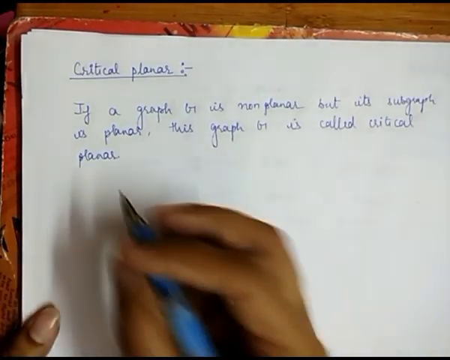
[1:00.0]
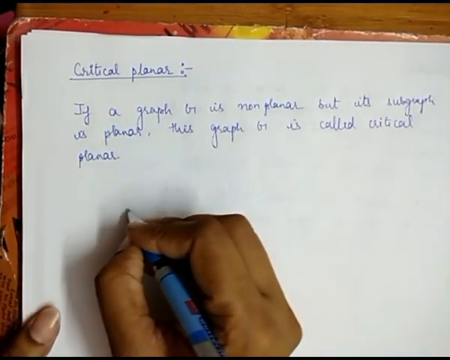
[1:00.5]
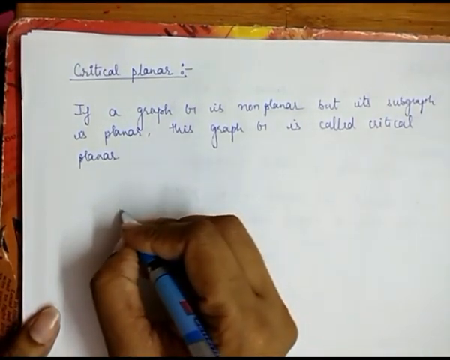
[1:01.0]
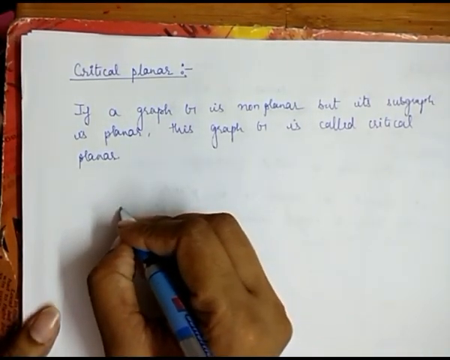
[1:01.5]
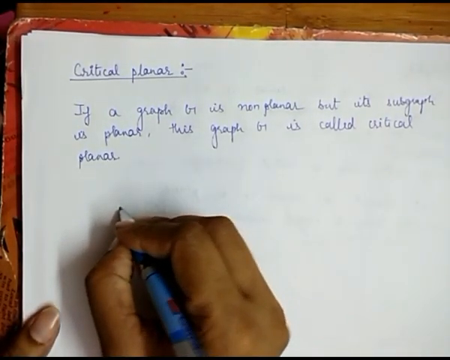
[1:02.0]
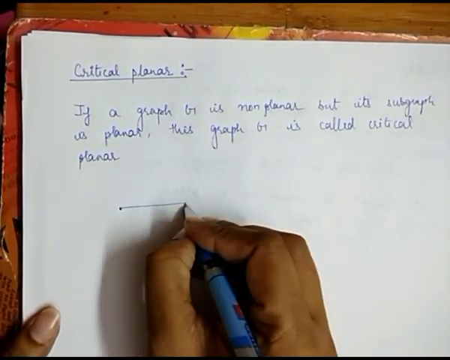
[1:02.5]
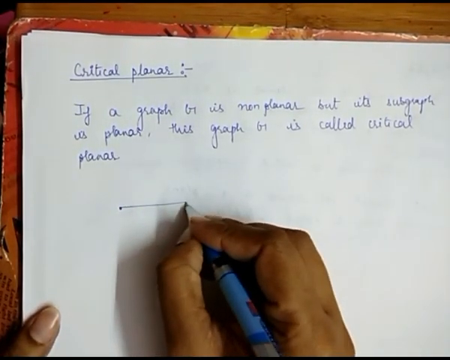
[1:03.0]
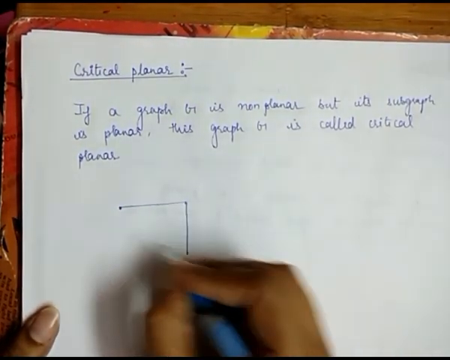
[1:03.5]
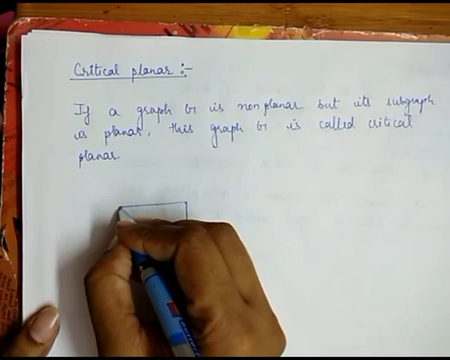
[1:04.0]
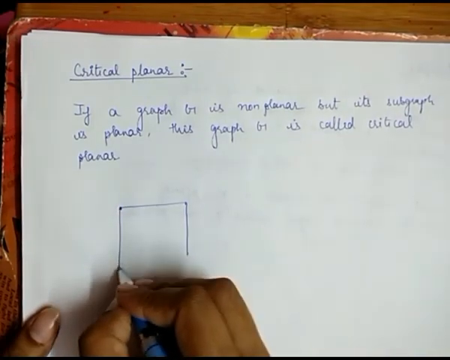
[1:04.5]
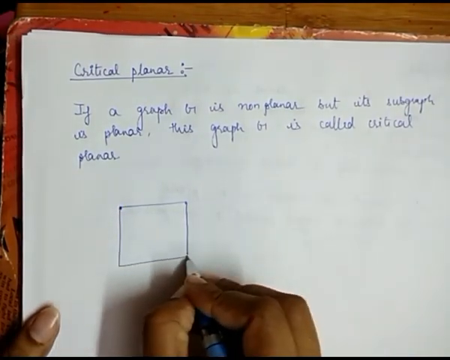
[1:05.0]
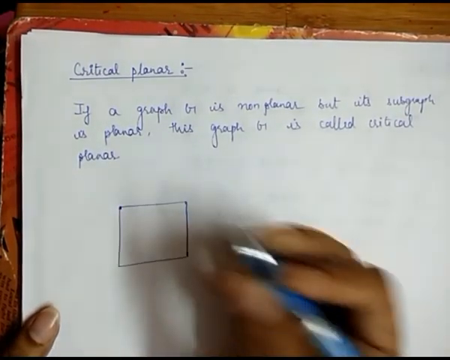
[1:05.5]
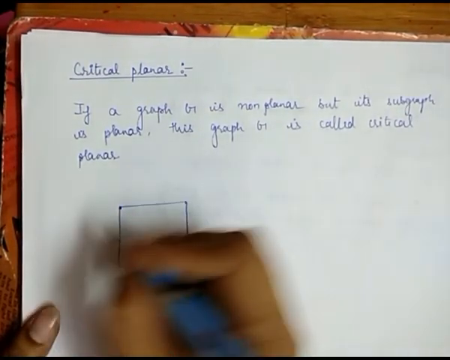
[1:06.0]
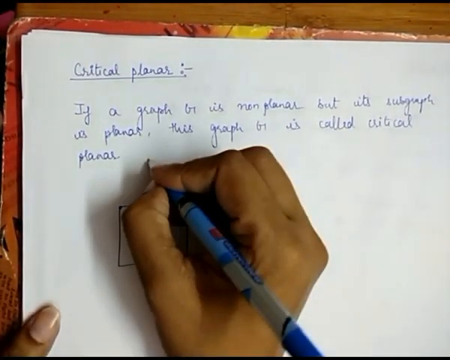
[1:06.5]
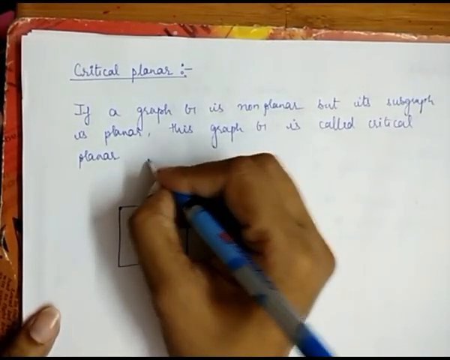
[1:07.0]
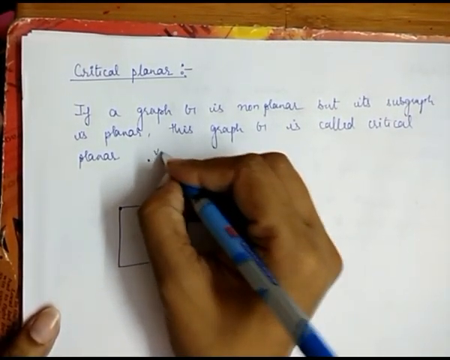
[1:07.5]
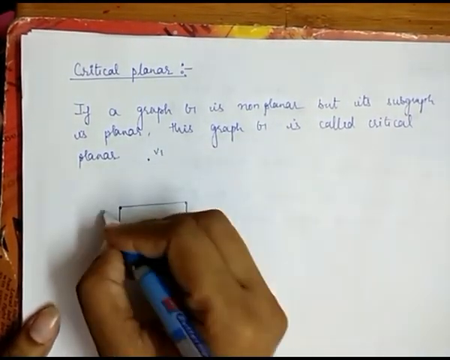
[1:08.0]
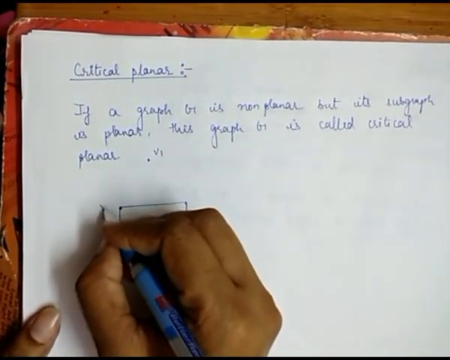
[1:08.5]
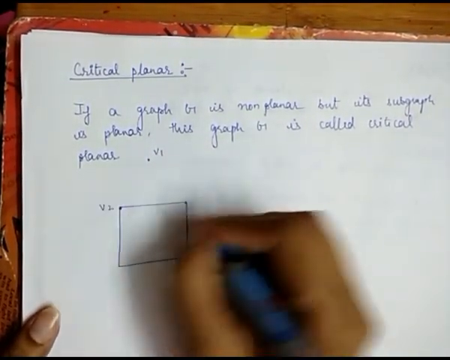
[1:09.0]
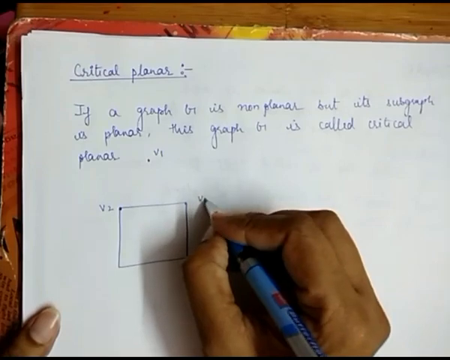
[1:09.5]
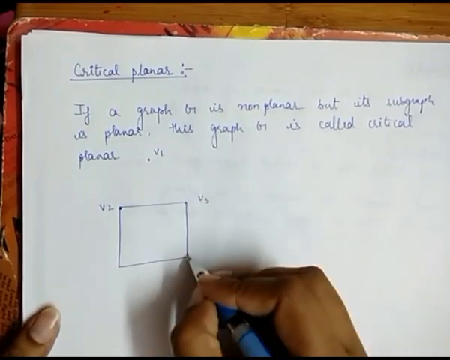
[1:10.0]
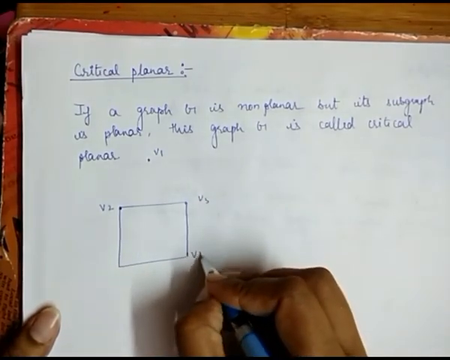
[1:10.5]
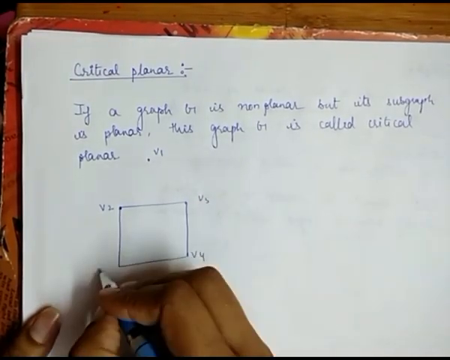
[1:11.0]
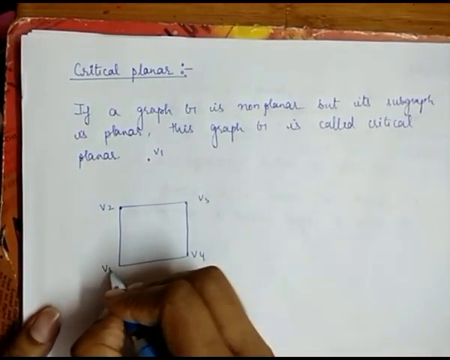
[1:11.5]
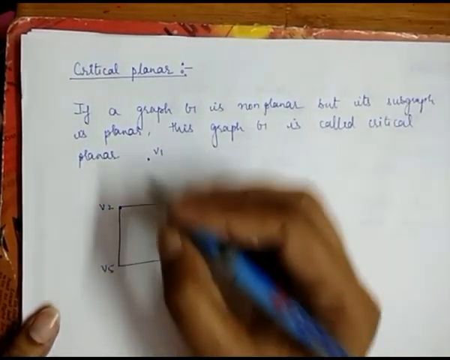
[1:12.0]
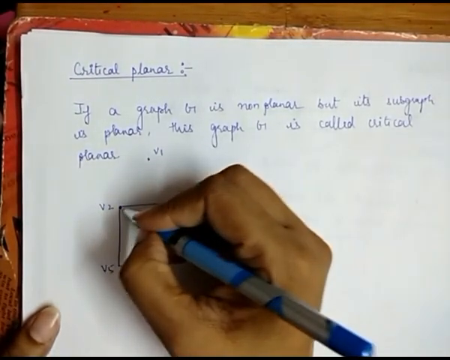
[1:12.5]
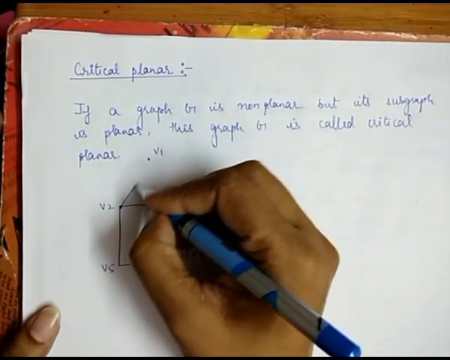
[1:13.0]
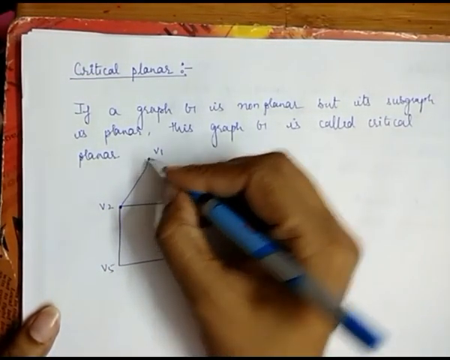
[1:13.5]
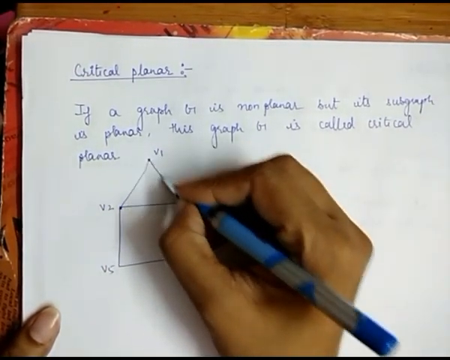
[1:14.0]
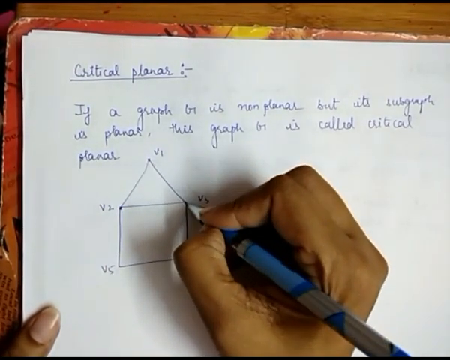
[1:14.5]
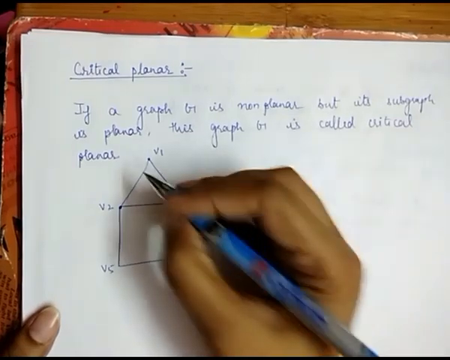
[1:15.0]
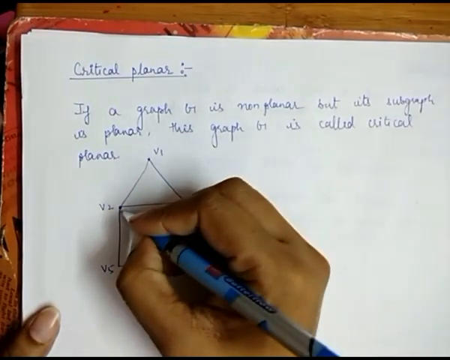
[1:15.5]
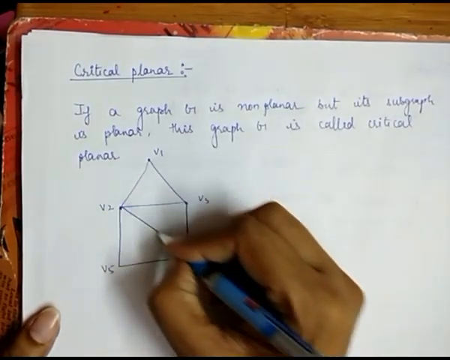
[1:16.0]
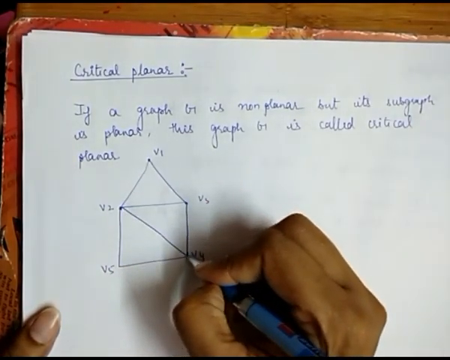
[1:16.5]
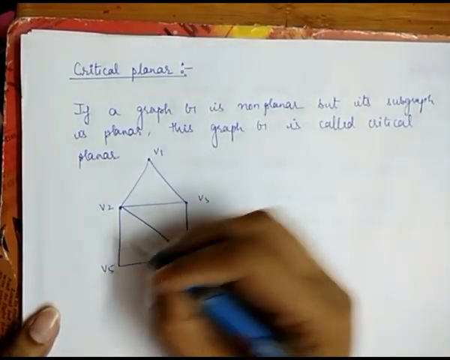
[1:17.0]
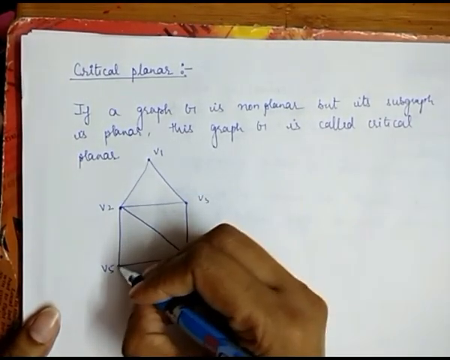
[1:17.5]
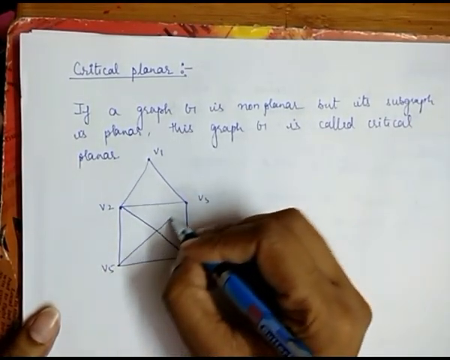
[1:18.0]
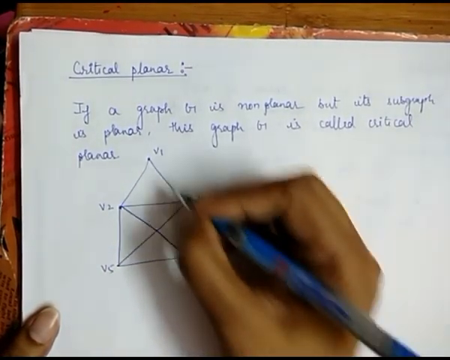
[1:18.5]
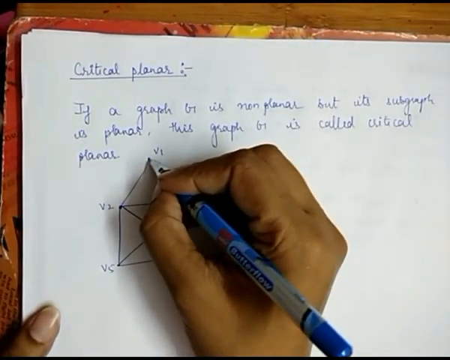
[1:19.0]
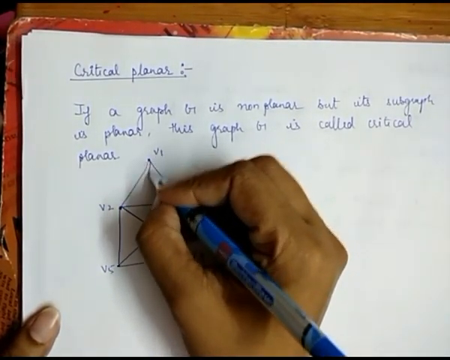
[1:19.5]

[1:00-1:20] The orange, red and yellow mat is on the wooden table, and the woman's left thumbnail holds down the bottom left-hand corner of the paper. Instead of continuing her writing, she lowers the pen a little down and to the left and draws a square, starting at the upper left corner, moving to the upper right, down the right side, across to the left and back up to the top left. She goes back up next to her writing and writes a dot and V1, then writes V2 next to the upper left of the square, and then V3, V4 and V5 at the other corners from left to right. She draws a line connecting V2 up to V1 near her writing and down to V3, then an X from V2 to V4 and from V3 to V5, and then a line from V1 to V5.